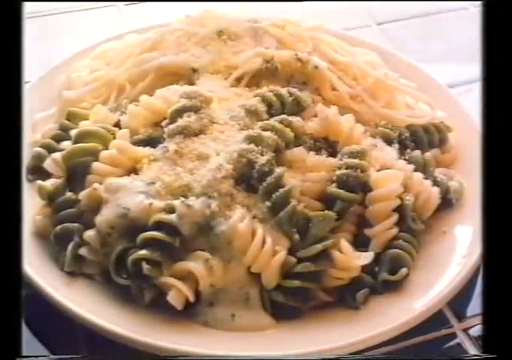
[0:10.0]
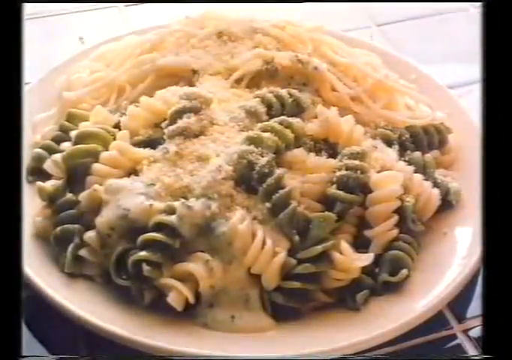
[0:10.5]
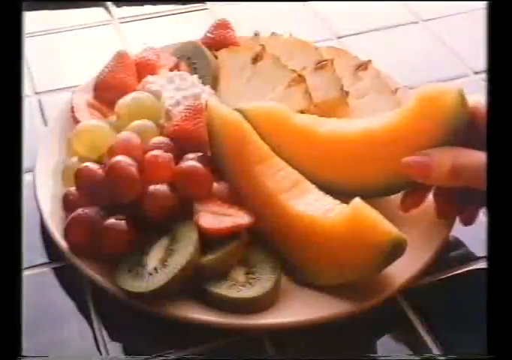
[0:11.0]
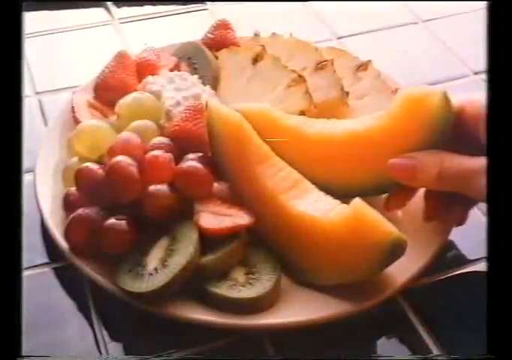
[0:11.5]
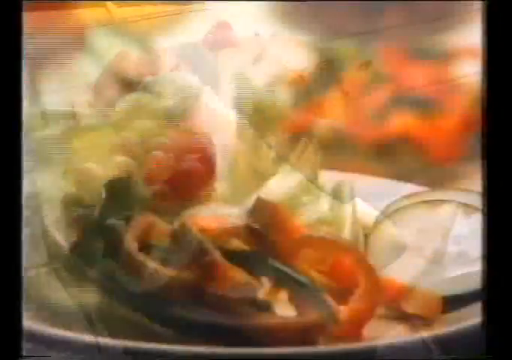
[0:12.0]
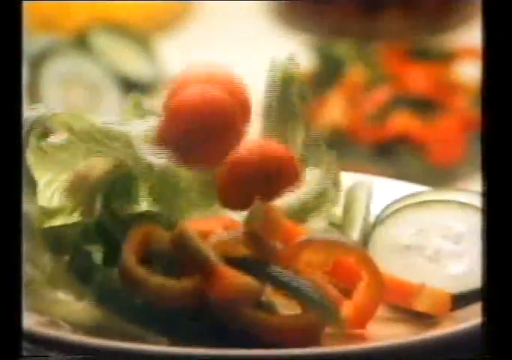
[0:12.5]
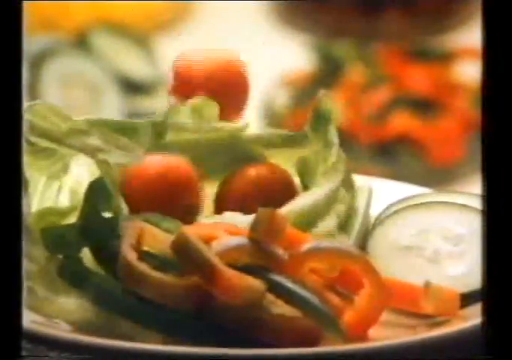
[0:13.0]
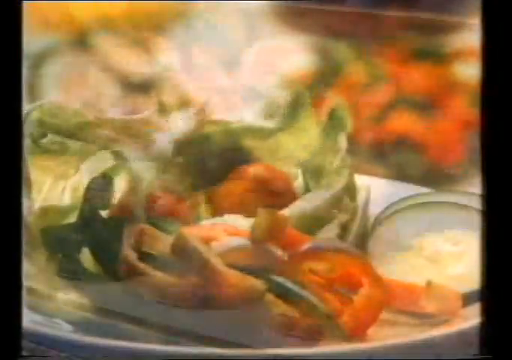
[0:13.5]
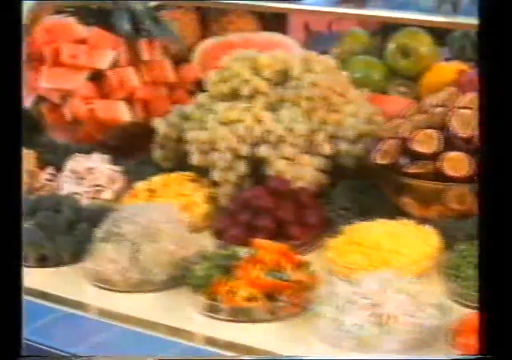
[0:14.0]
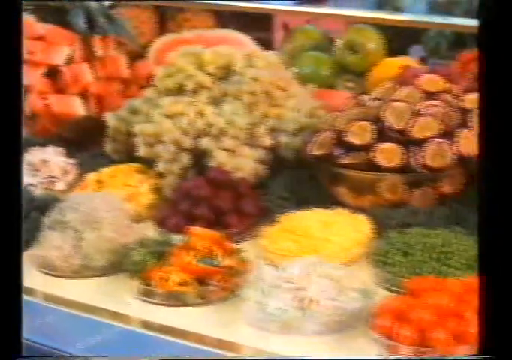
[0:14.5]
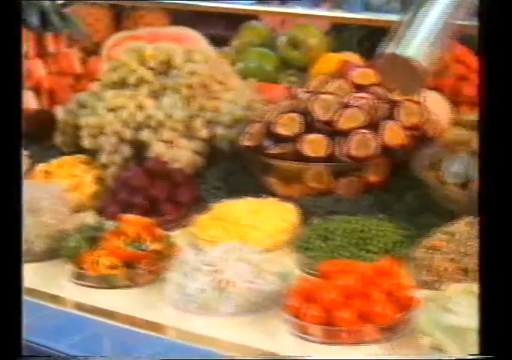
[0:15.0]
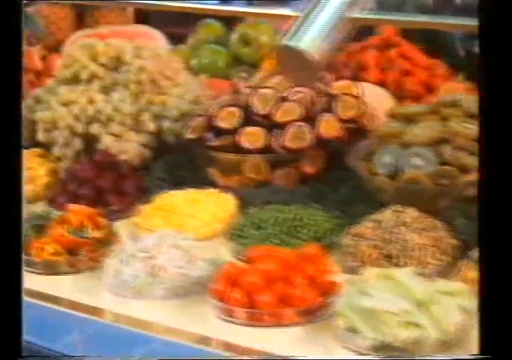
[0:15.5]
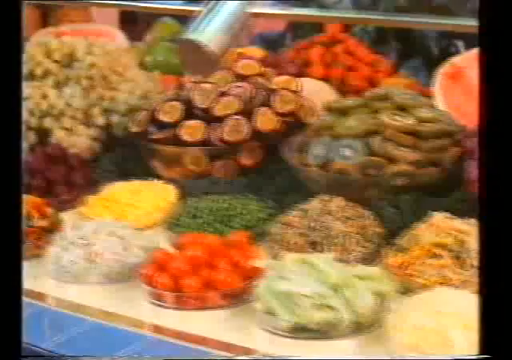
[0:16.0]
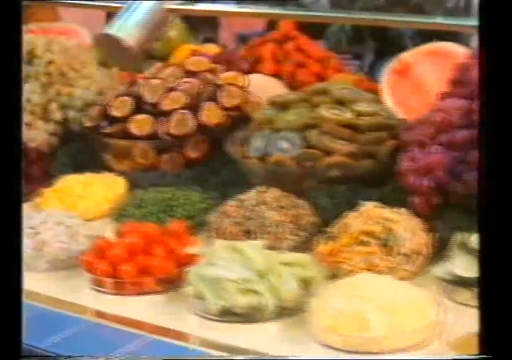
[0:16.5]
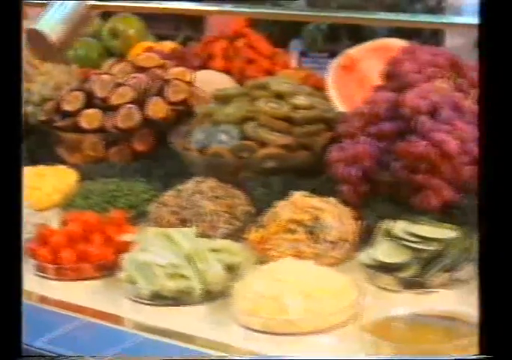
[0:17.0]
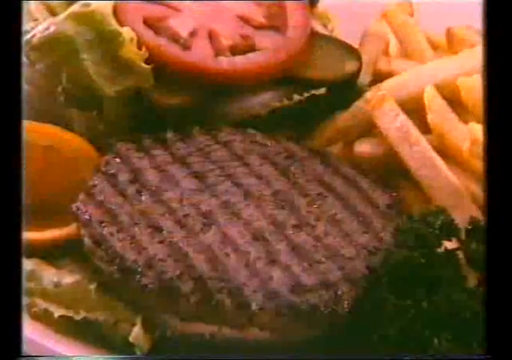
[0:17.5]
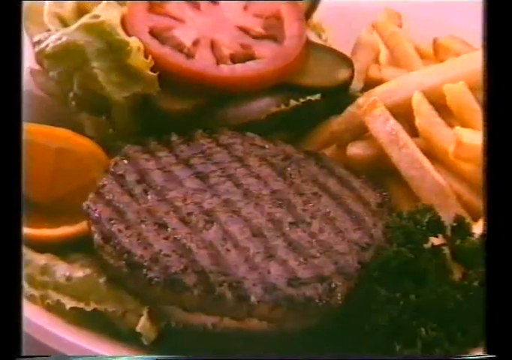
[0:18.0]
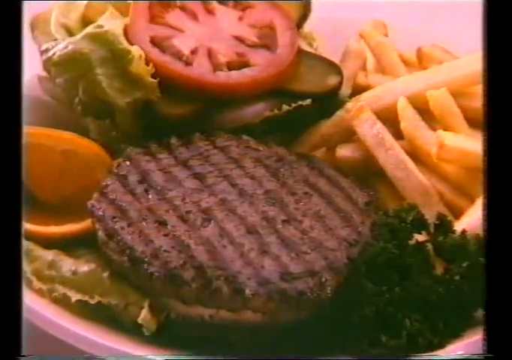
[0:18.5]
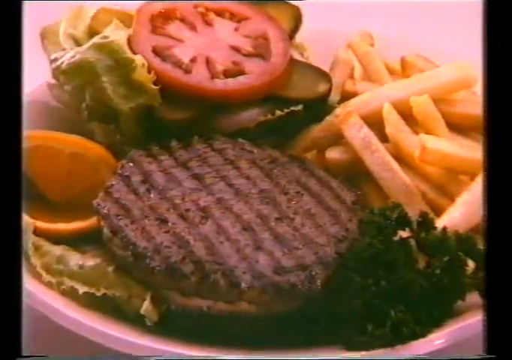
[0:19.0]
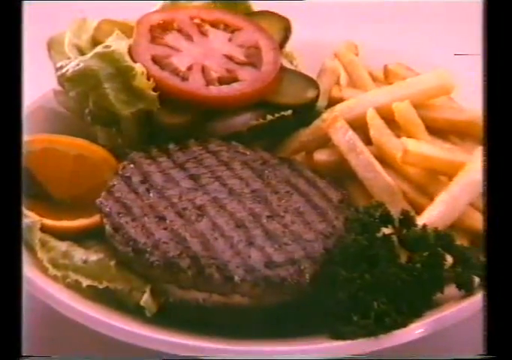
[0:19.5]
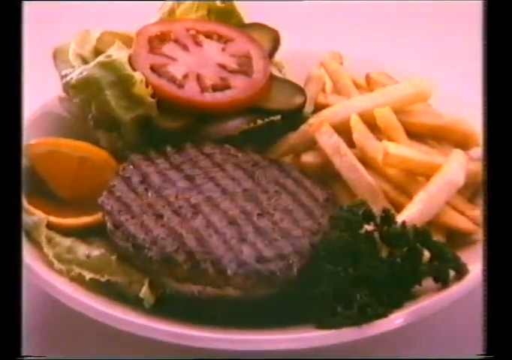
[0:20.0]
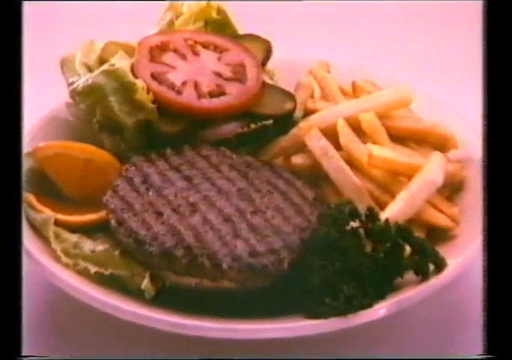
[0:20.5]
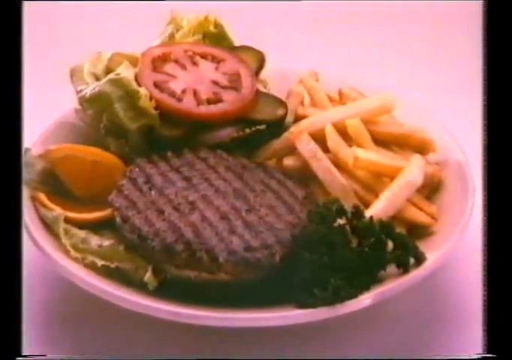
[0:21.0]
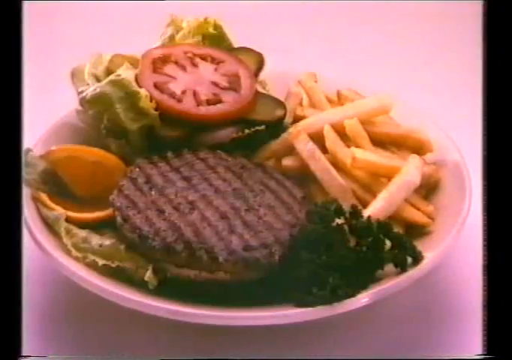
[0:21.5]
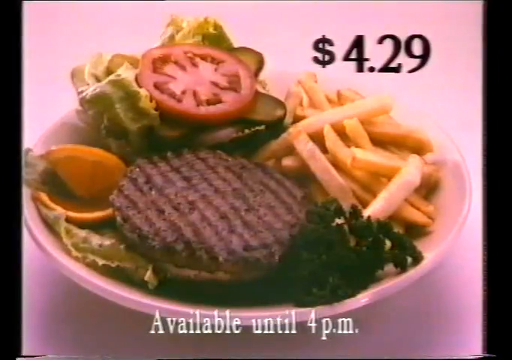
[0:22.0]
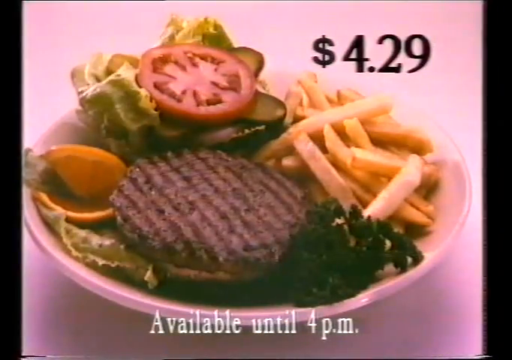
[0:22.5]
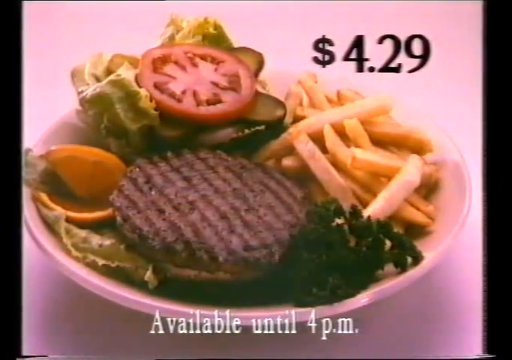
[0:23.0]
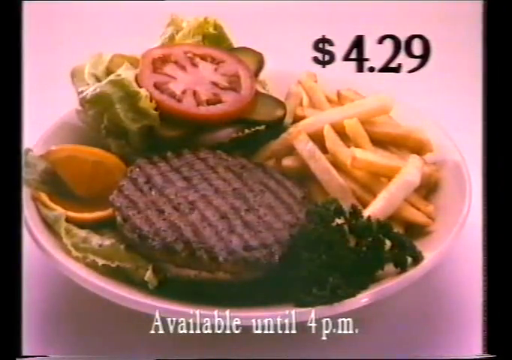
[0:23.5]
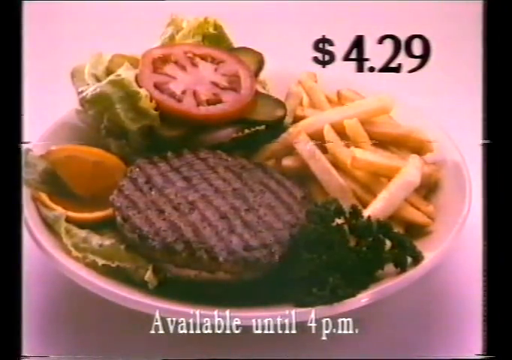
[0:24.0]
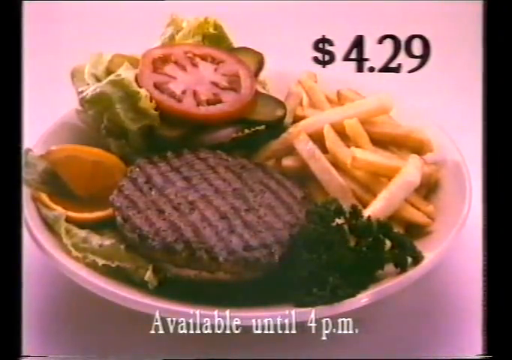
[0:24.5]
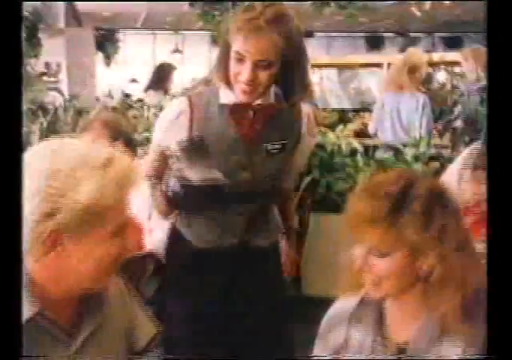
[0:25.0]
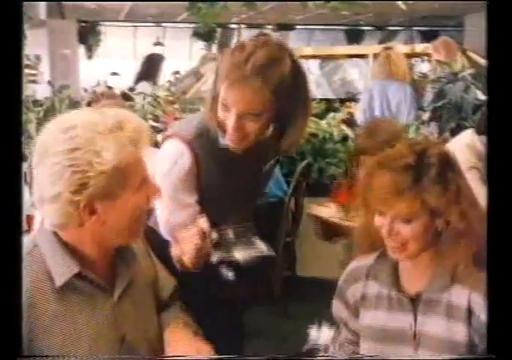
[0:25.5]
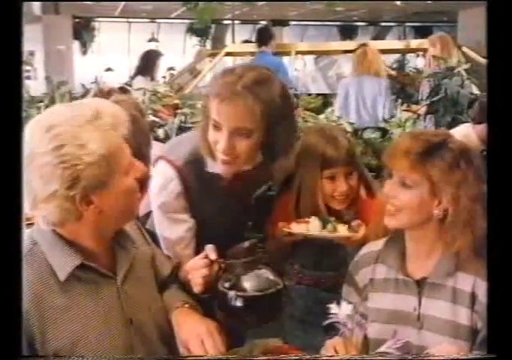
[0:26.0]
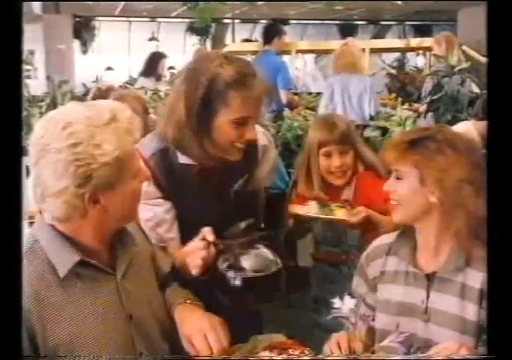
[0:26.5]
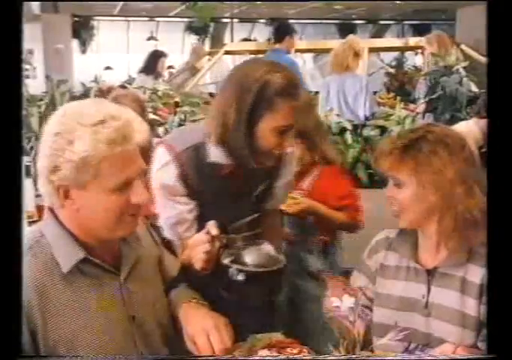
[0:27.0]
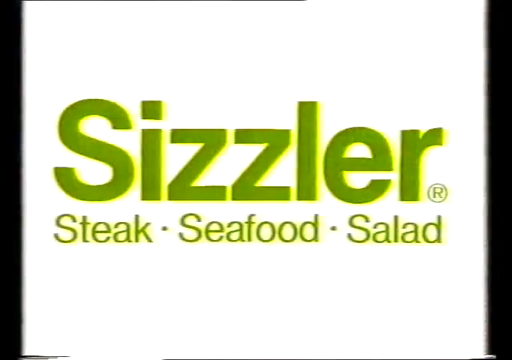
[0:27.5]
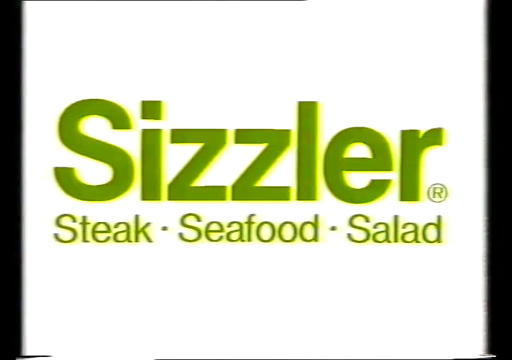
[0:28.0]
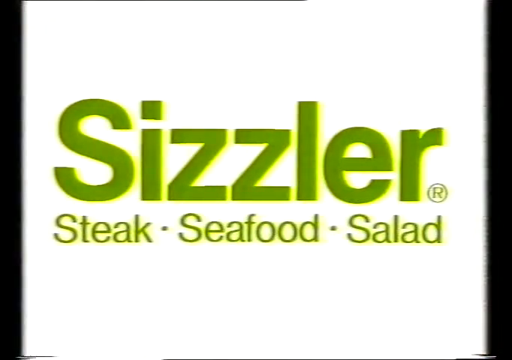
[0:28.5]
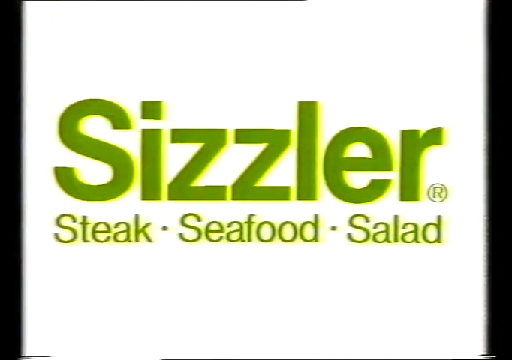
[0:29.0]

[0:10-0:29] A white plate holds fruits: well-cut pieces of kiwi, red grapes, green grapes, strawberries, three slices of pineapple, and two large slices that look like white watermelon. There seem to be a lot of grapes. Two hands with painted nails place one of the fruits onto the plate. Next, some vegetables bounce off the plate, including some green leaves and cucumber. Then more and more vegetables and fruits appear, many of them in bowls and in large numbers. A plate then seems to have a serving of food on it: some fries, a grilled burger, some lettuce and a piece of tomato. Numbers pop up reading "$4.29 available until 4 PM". Next there are lots of people, but mainly one waitress approaching a seated couple and offering some coffee. At the end, words pop up reading "sizzler steak, seafood, salad".